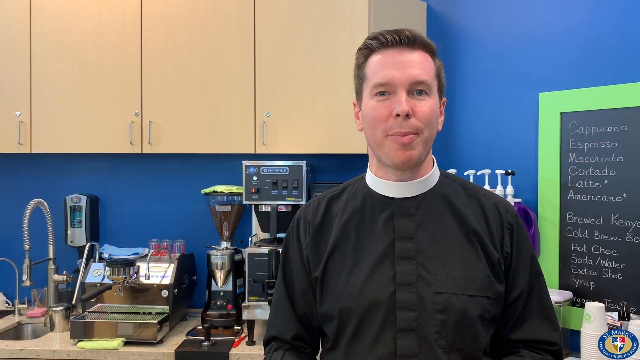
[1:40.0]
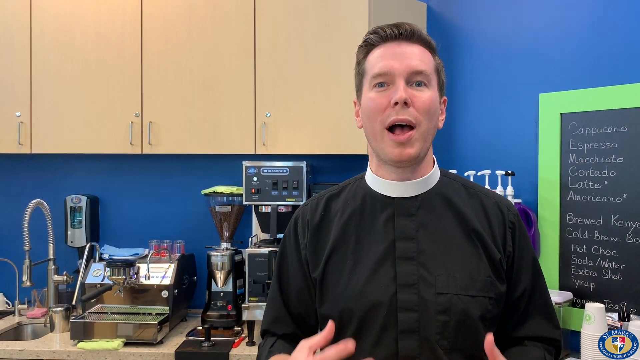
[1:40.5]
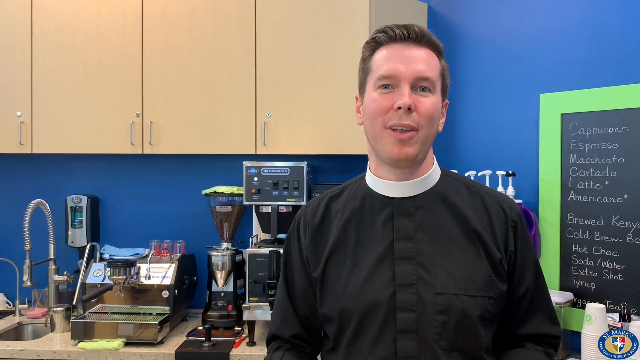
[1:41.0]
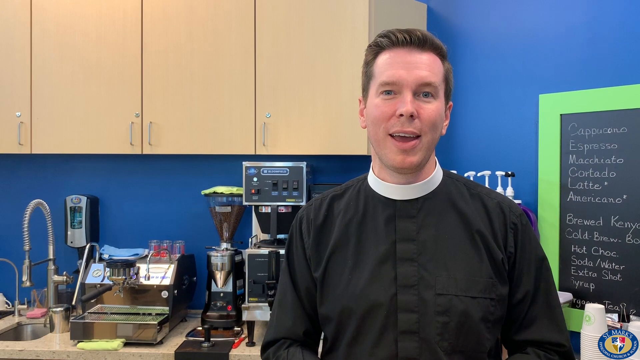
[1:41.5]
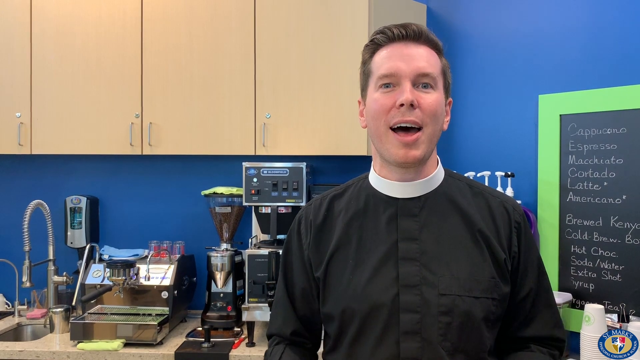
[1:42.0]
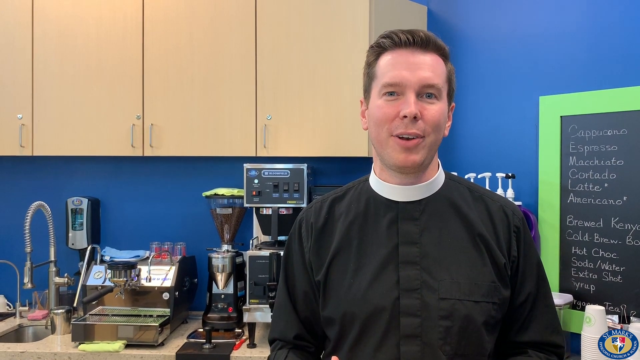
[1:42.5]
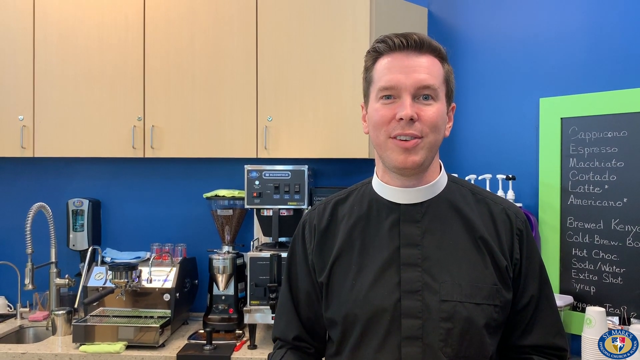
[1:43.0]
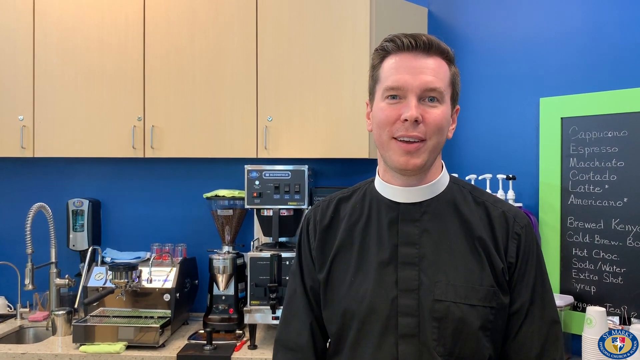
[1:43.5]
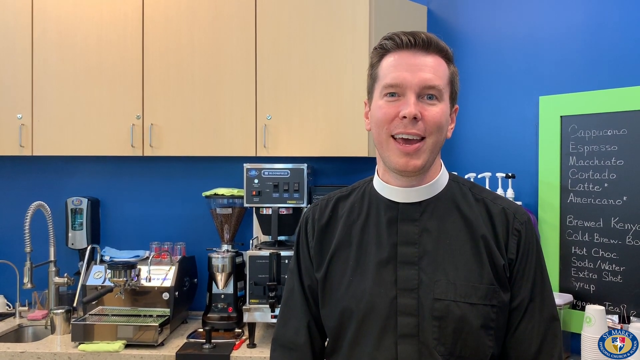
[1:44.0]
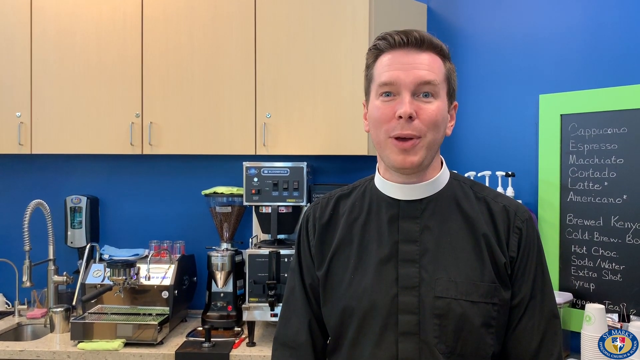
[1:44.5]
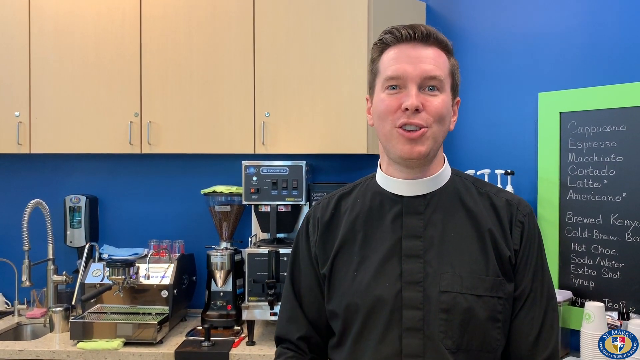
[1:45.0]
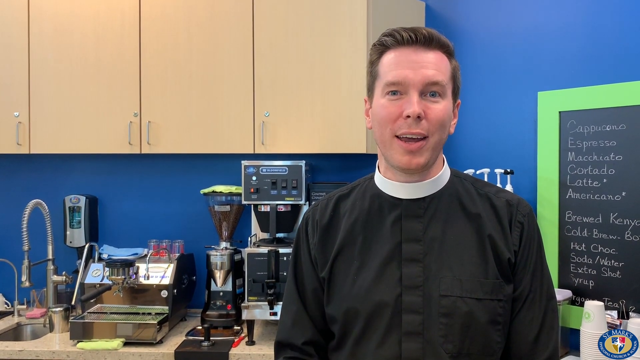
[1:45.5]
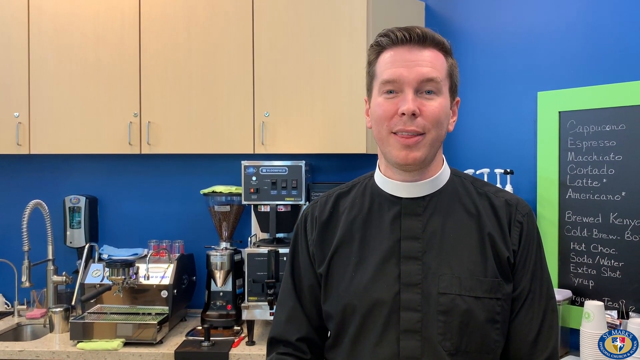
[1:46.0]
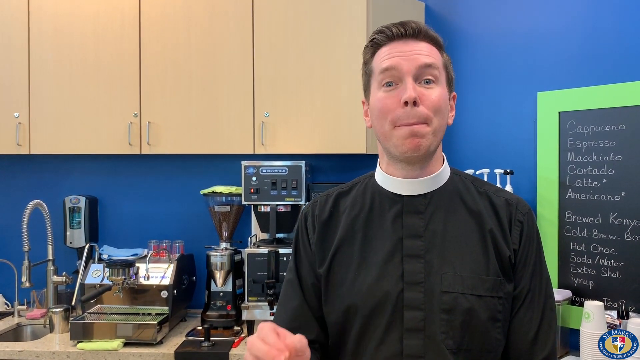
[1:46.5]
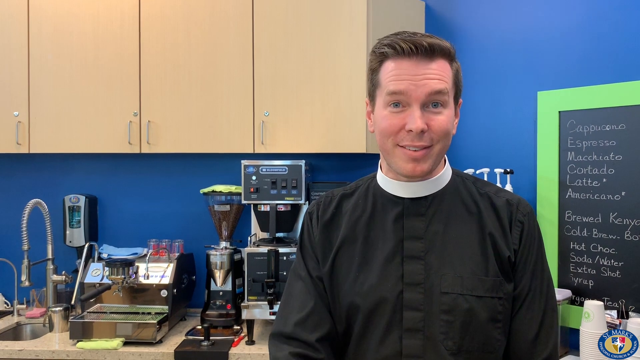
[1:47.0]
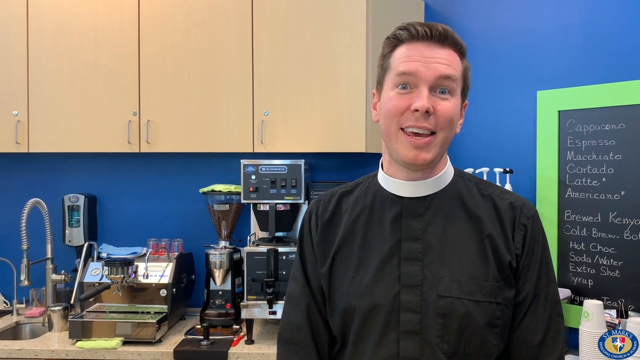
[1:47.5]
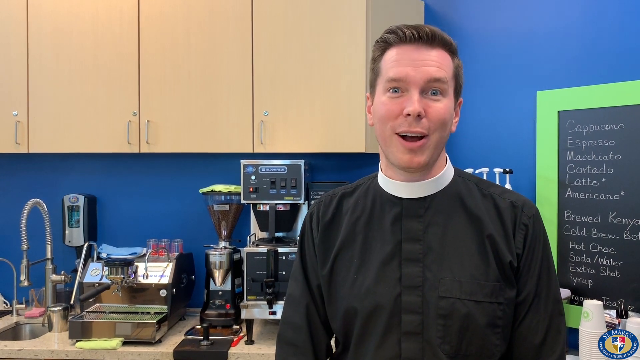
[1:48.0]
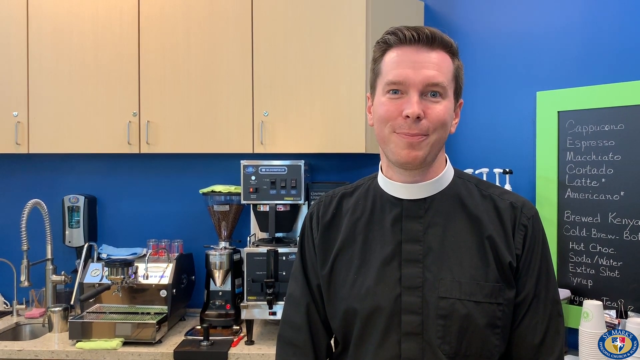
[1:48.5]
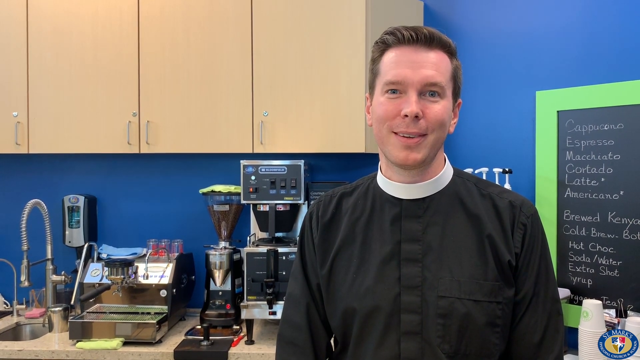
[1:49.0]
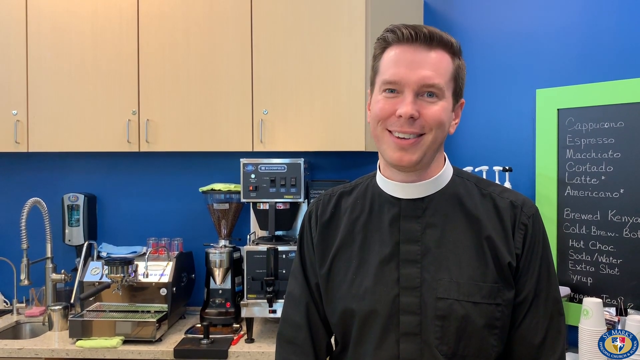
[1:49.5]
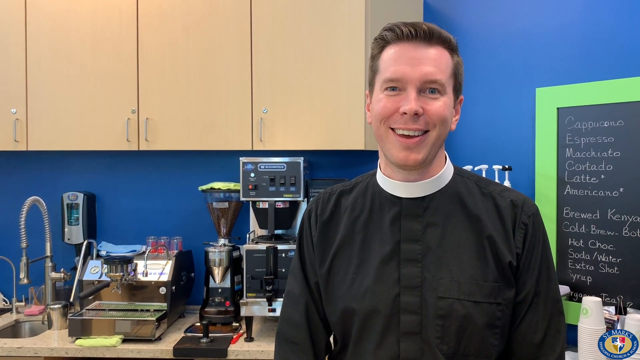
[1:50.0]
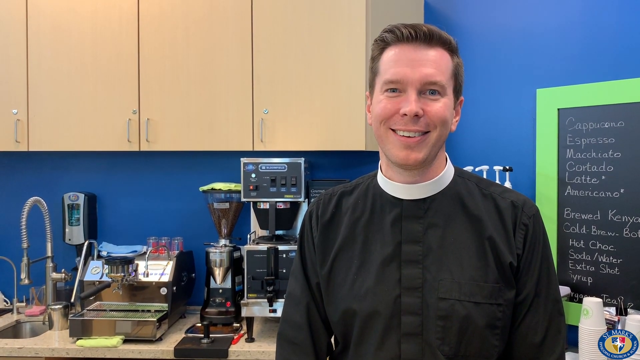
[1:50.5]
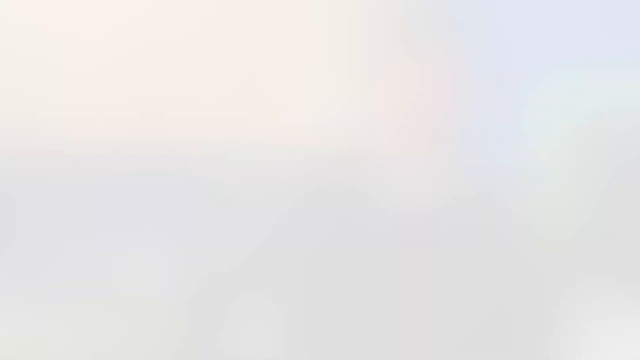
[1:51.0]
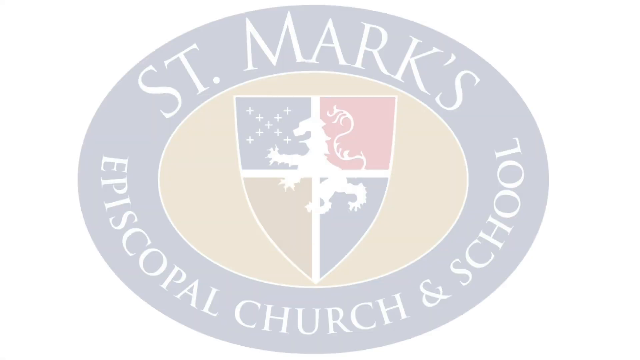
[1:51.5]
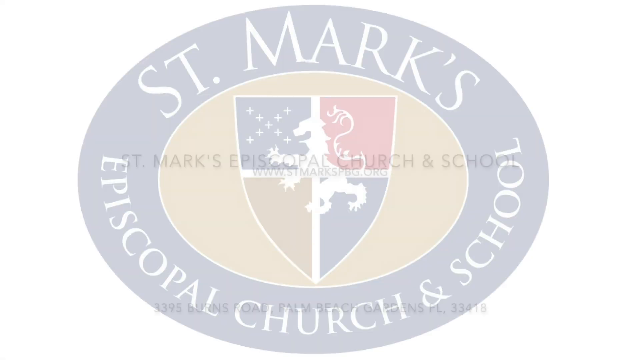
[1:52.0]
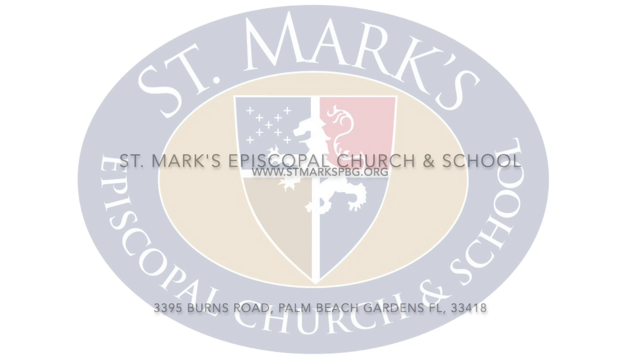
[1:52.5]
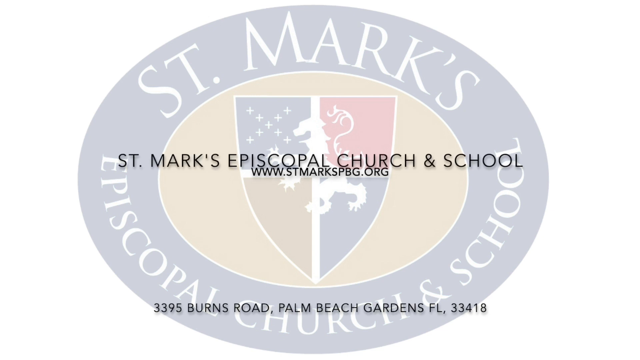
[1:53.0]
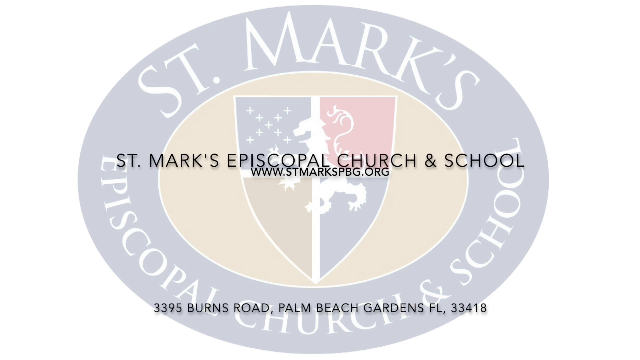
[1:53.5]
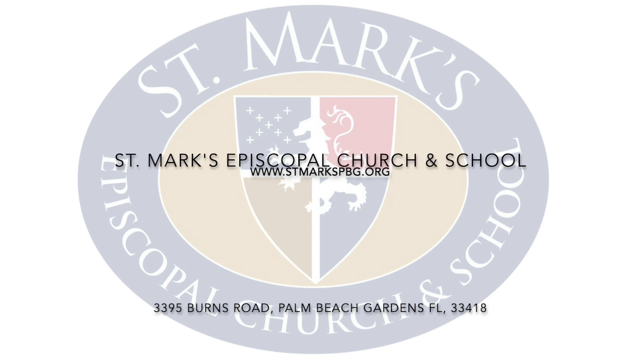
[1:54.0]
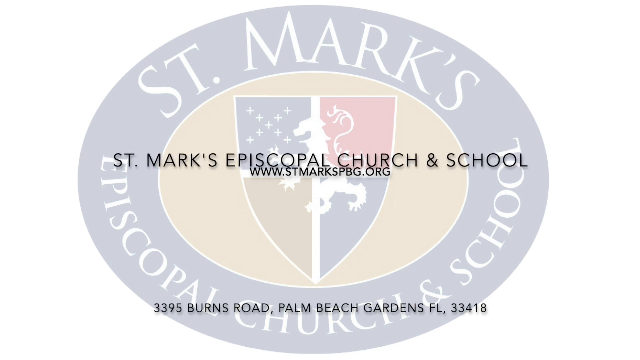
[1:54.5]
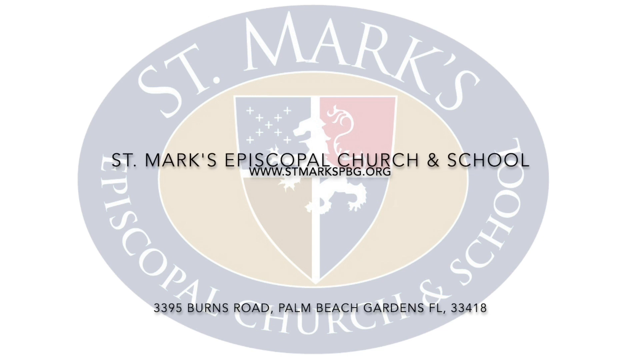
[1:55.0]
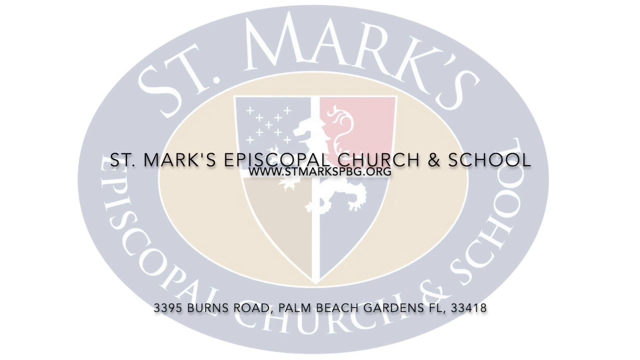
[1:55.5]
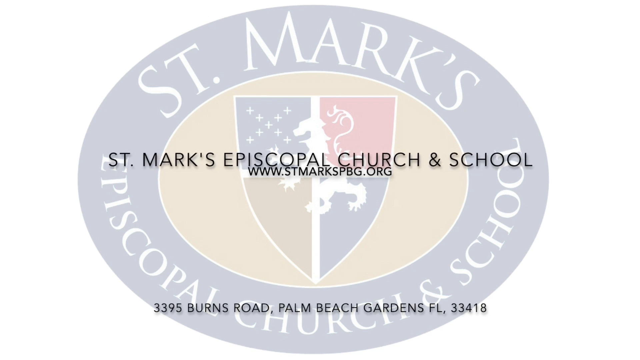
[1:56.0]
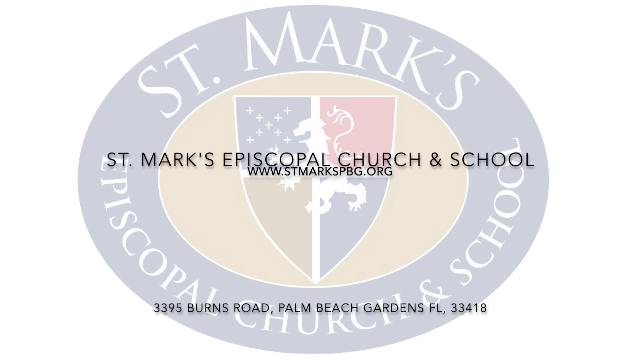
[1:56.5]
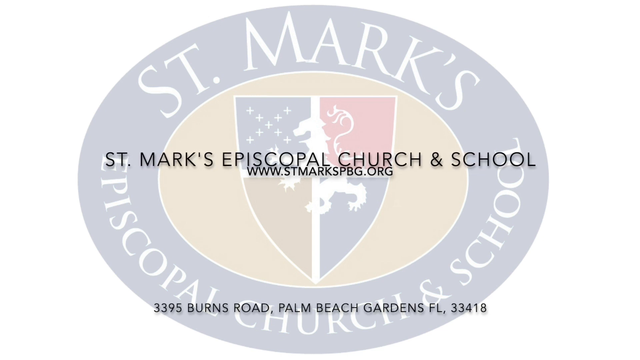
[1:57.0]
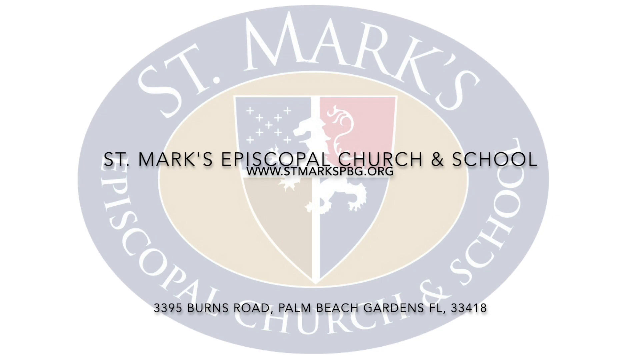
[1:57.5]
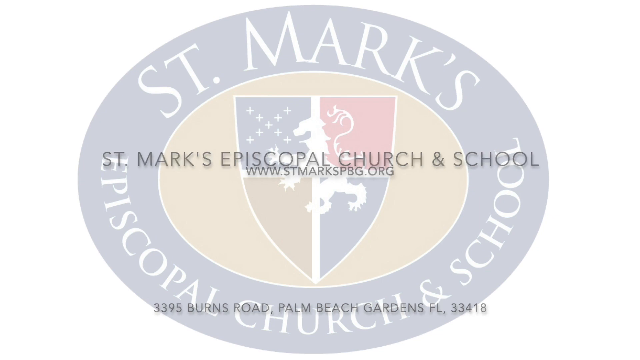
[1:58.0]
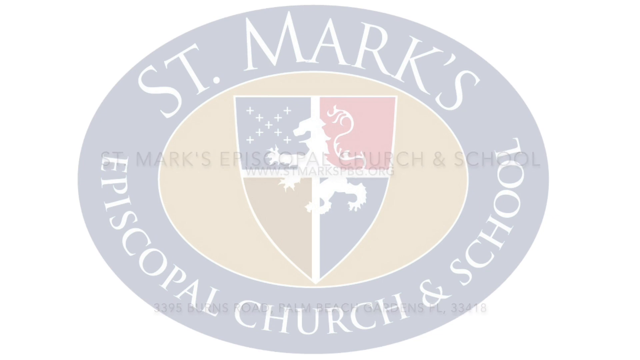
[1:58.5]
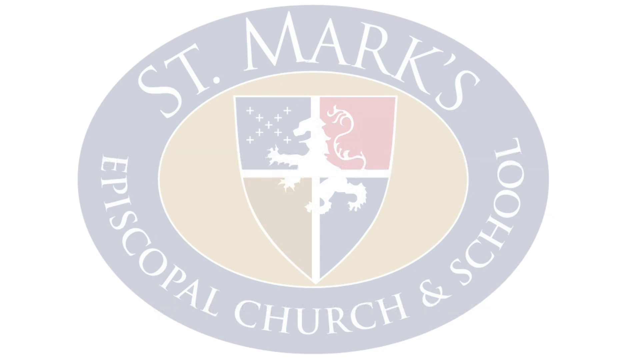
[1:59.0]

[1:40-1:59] The Reverend finishes the segment, looking calmer and moving his hands less, though still engaged and friendly. He smiles at the end, and the video cuts to white, showing the logo of St. Mark's Episcopal Church and School. In the middle of the logo is a coat of arms featuring an animal that is a mix of a griffin and a lion, on a shield with four sections: the first blue with white crosses forming an X, the next red, the third navy blue and the fourth green. A text overlay reads "St. Mark's Episcopal Church and School," along with the website "stmarkspbg.org" and the address "3395 Burns Road, Palm Beach Gardens, Florida, 33418."